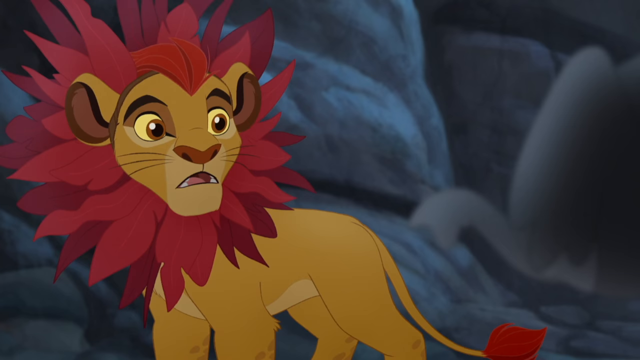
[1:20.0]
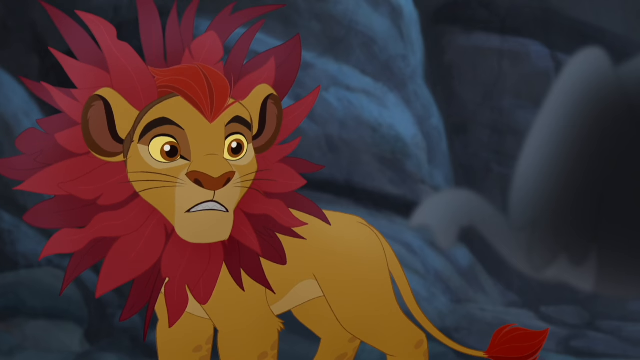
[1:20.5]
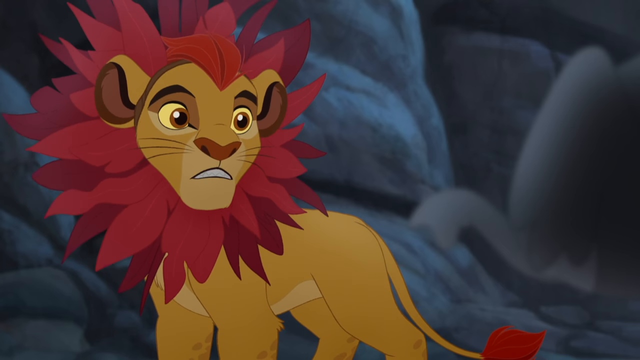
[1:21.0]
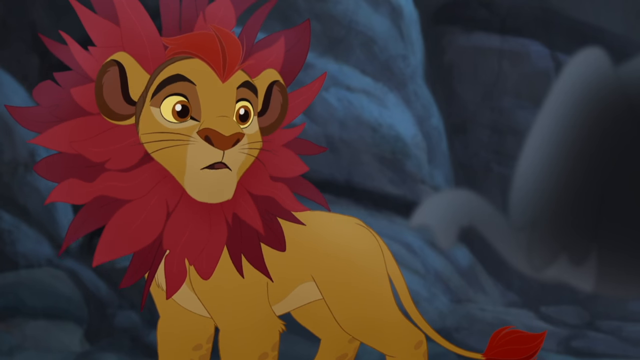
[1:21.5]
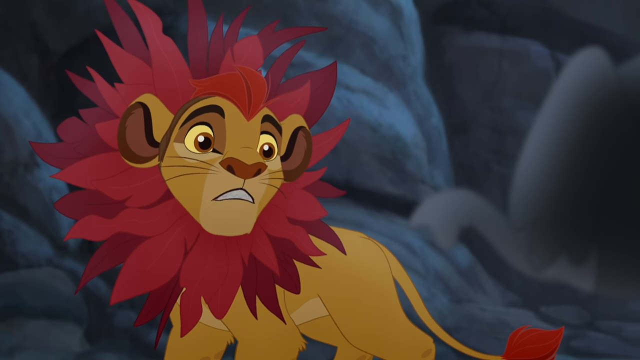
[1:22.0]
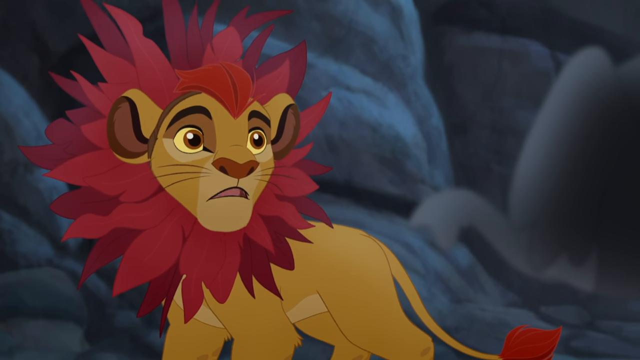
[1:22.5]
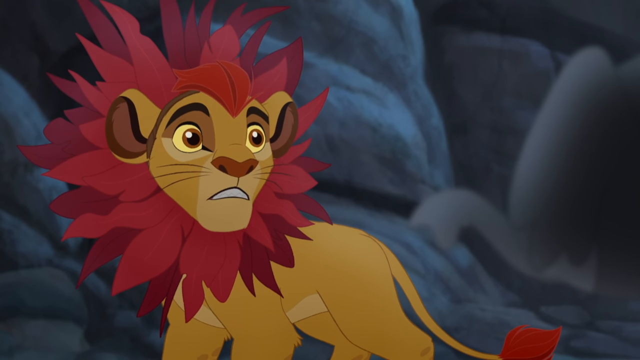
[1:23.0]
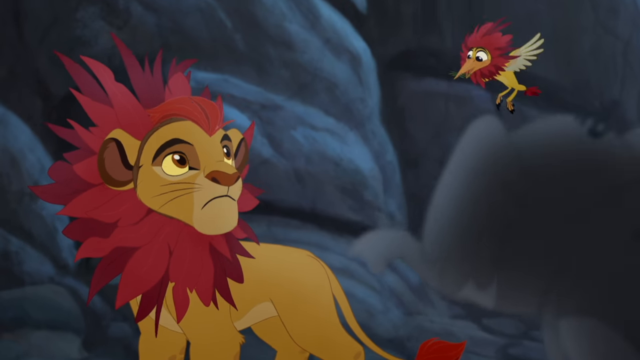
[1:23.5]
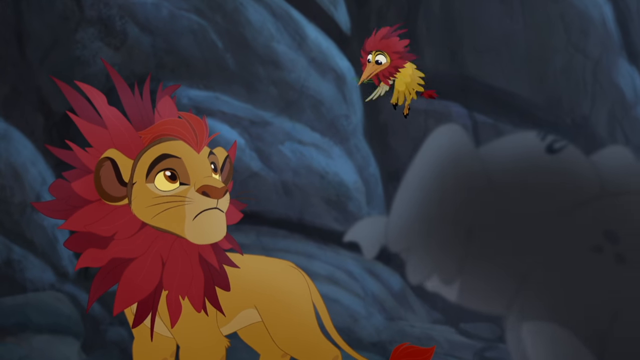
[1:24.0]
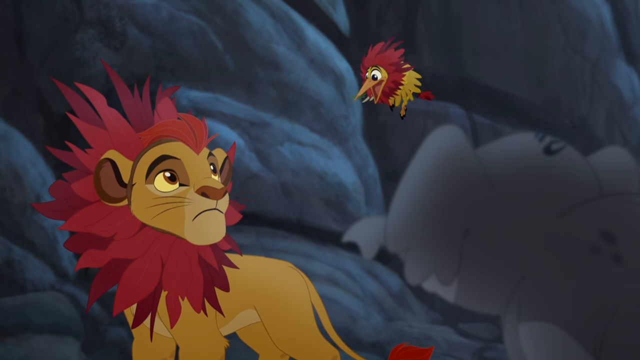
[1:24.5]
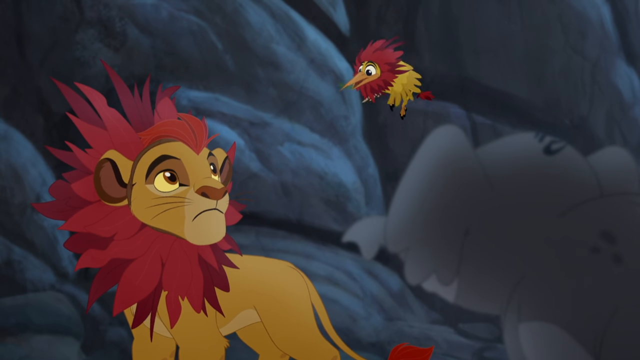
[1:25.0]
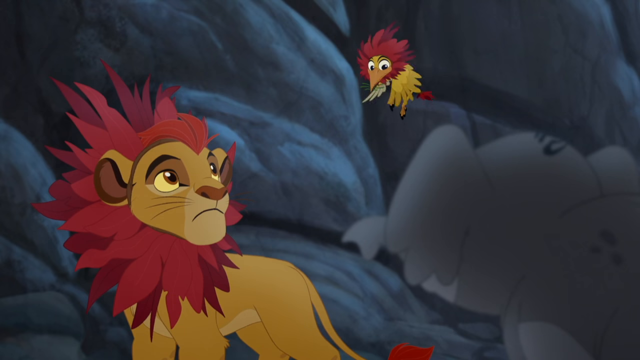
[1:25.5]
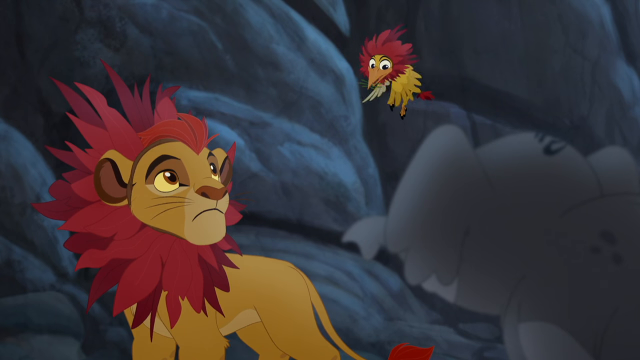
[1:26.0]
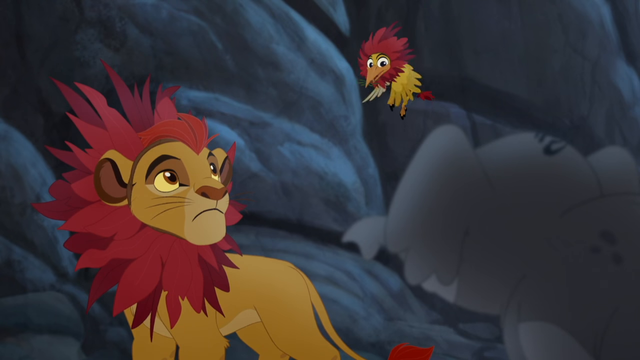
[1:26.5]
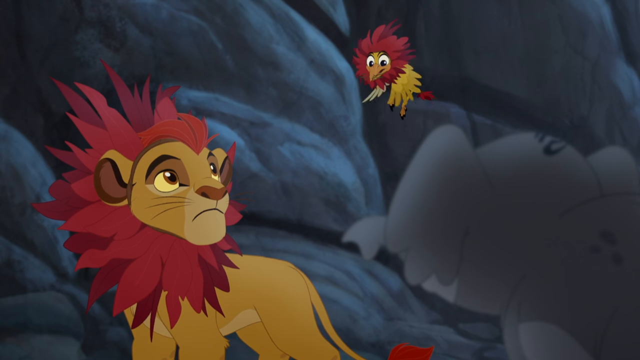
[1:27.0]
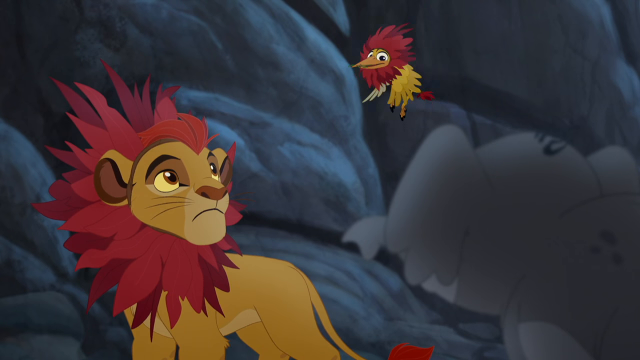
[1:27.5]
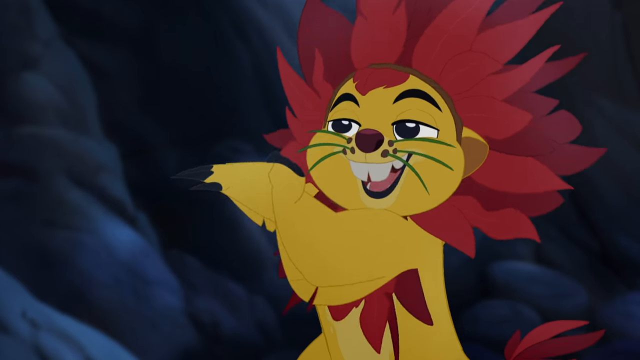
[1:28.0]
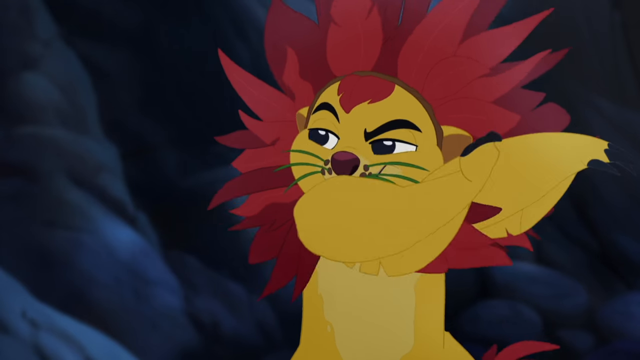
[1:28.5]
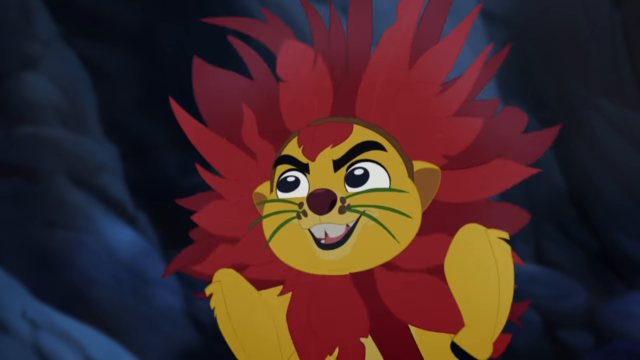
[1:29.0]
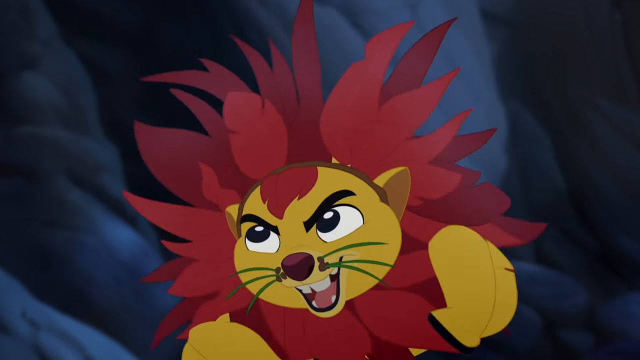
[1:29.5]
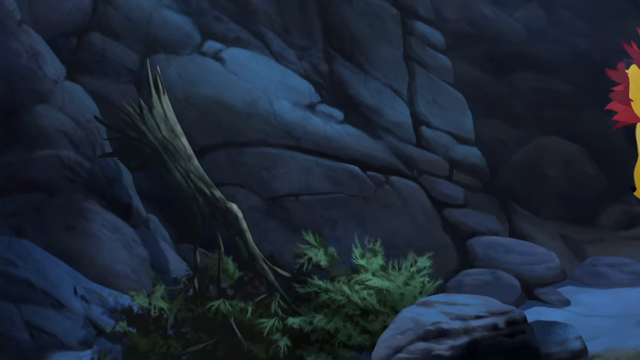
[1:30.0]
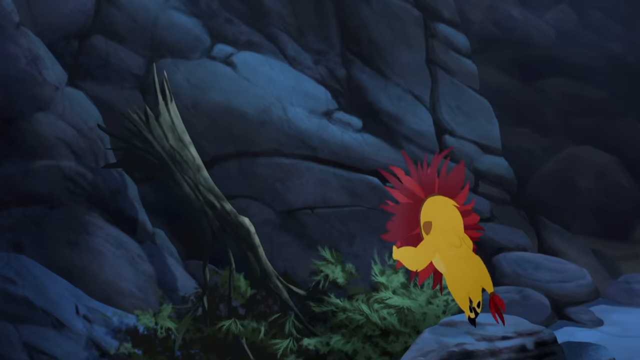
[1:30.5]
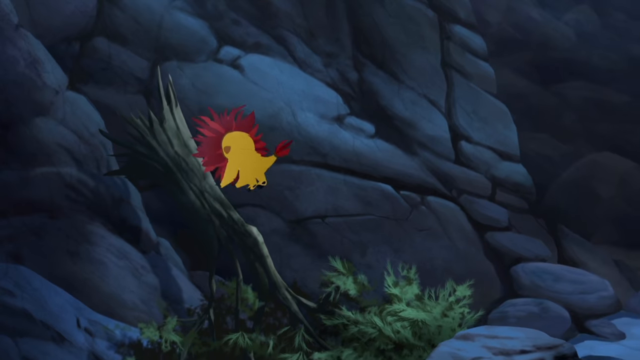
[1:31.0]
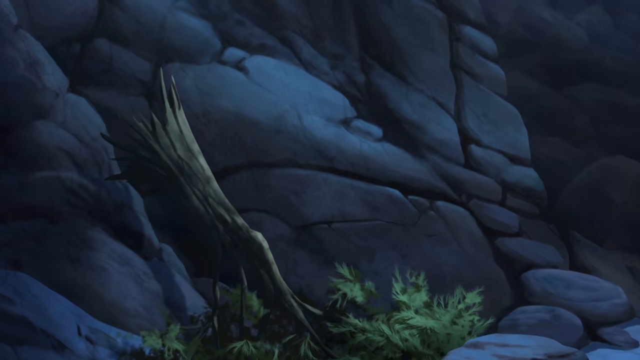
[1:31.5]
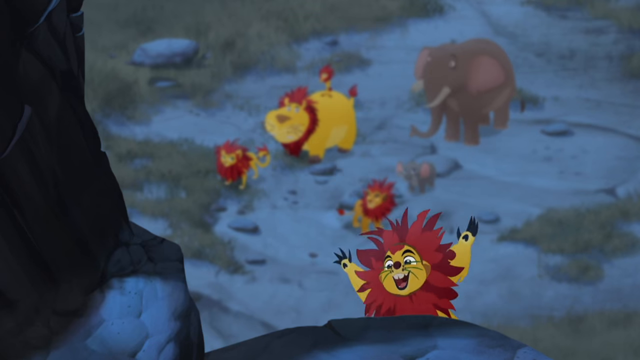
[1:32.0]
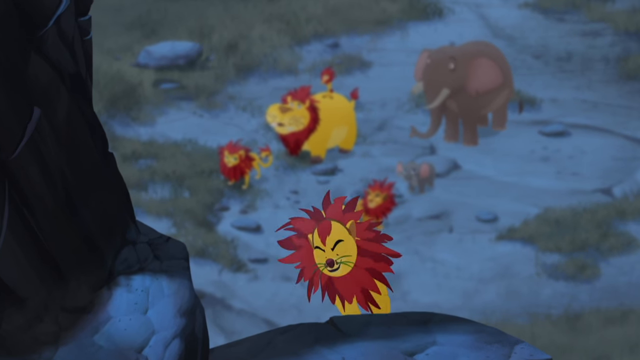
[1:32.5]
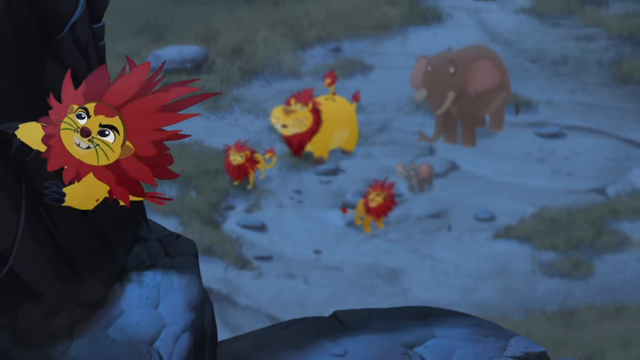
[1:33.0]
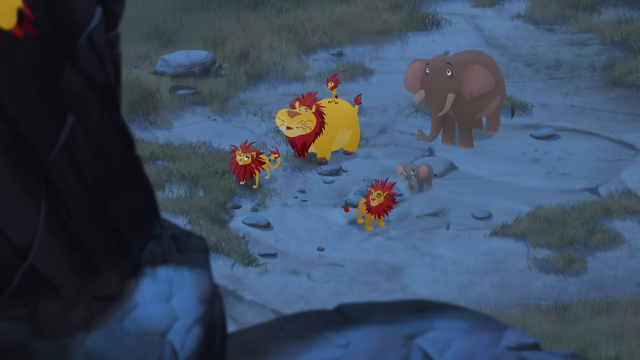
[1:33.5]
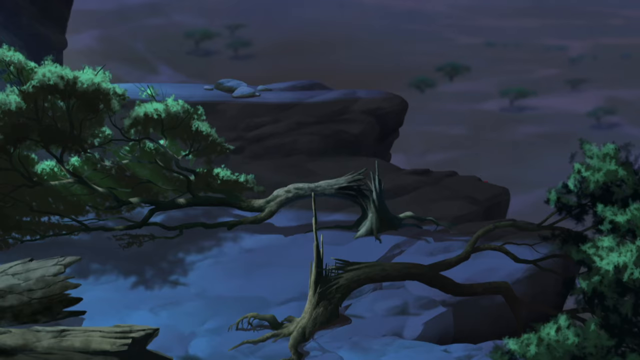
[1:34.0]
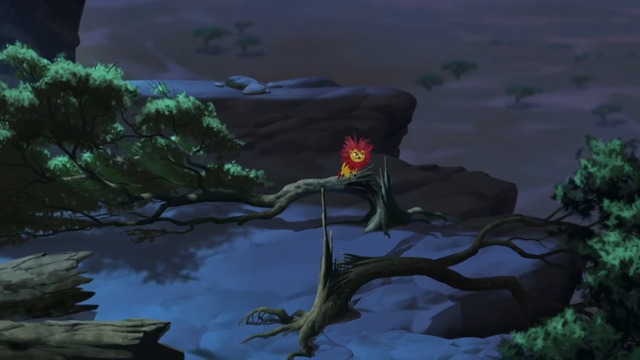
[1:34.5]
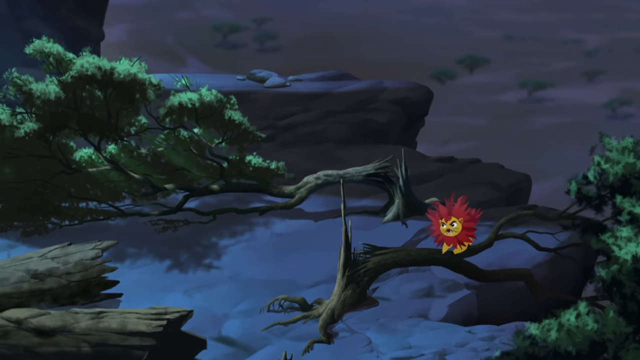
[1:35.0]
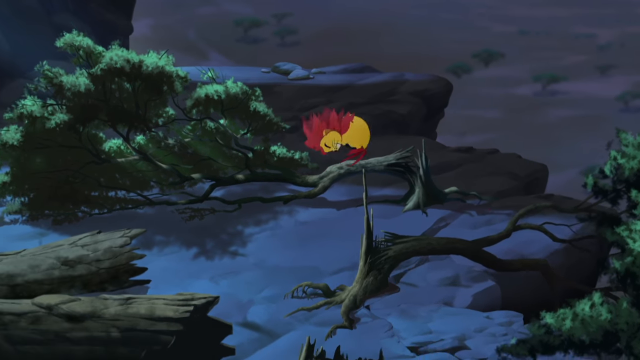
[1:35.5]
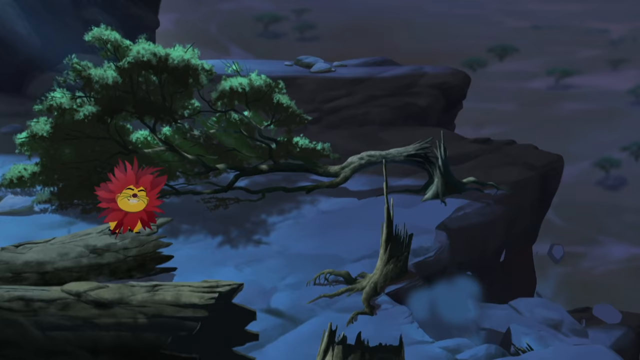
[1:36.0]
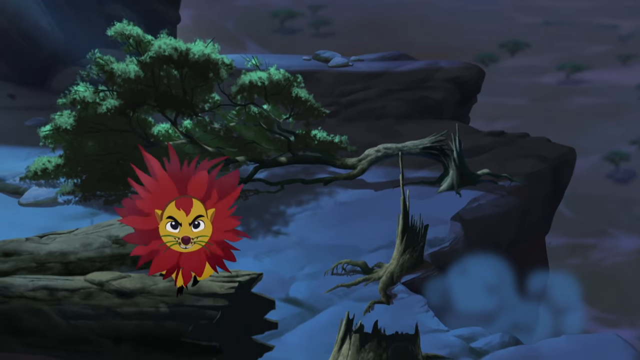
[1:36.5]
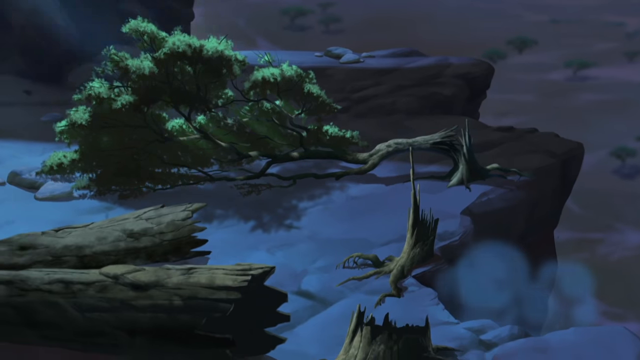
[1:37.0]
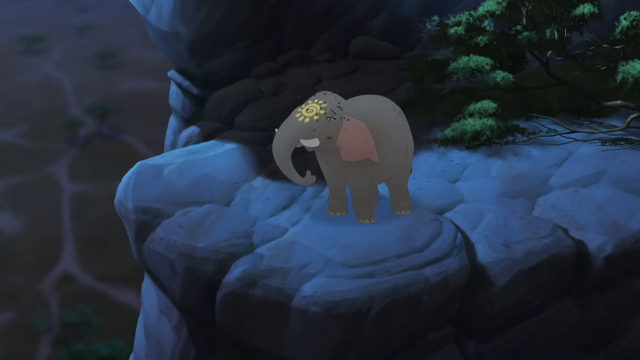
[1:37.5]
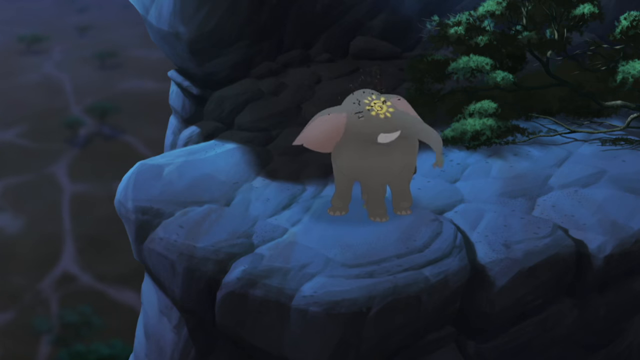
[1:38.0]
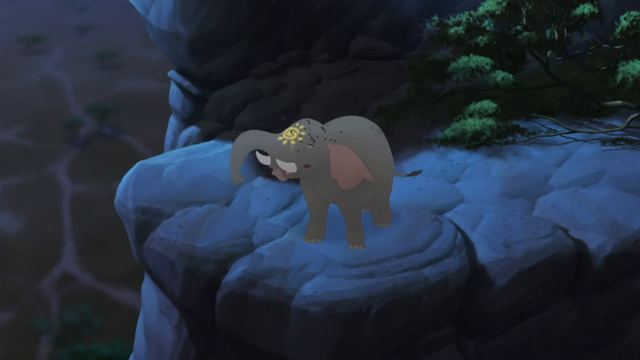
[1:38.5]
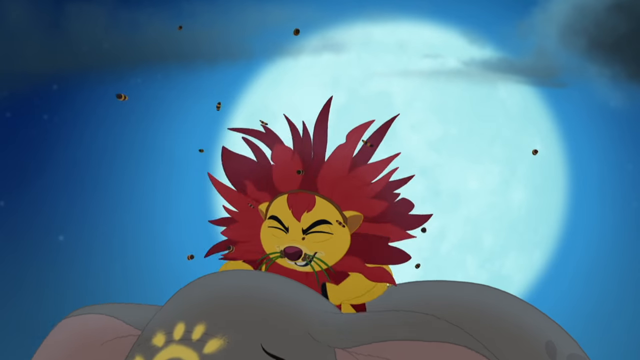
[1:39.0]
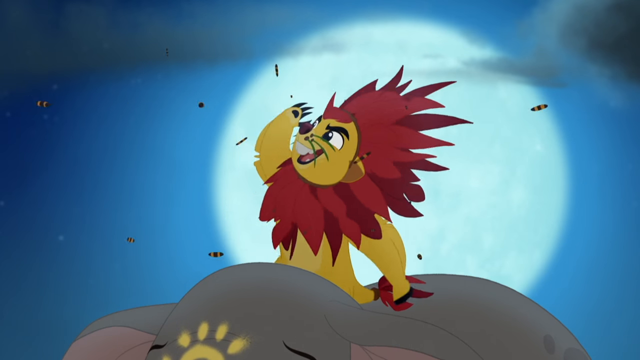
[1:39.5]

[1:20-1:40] A cartoonish lion that looks male has yellow fur, a red mane and brown eyes, and he is talking. A little bird with yellow feathers and red feathers around its head and at the end of its tail flies into the frame, hovers at about the middle top of the screen and talks to the male lion. Another lion appears, with yellow fur, a red mane, green whiskers and dark blue or black eyes; he looks serious or angry and is talking. He jumps toward a broken log on the ground leaning against a rocky cliff face, then jumps up off the log onto the top of the plateau above, where he hops on different broken trees. A big elephant near a cliff has yellow markings on its forehead above its trunk and a bunch of insects flying around its head. The little lion jumps onto the elephant's back and eats some of the insects, grabbing them out of the air.